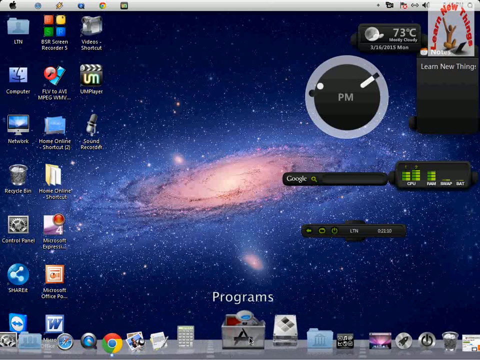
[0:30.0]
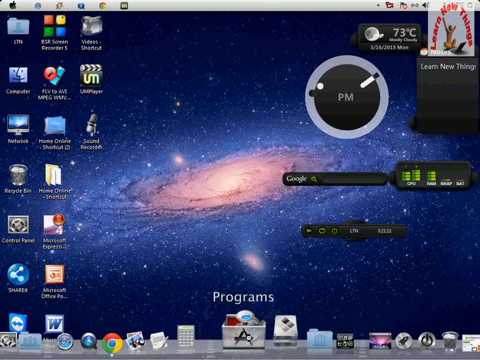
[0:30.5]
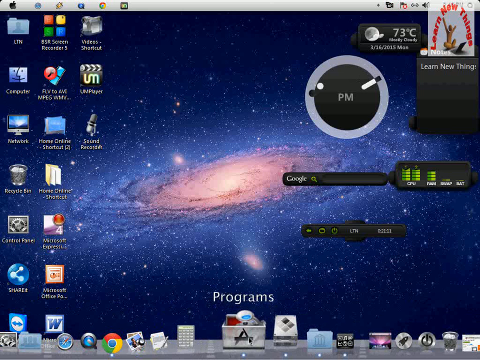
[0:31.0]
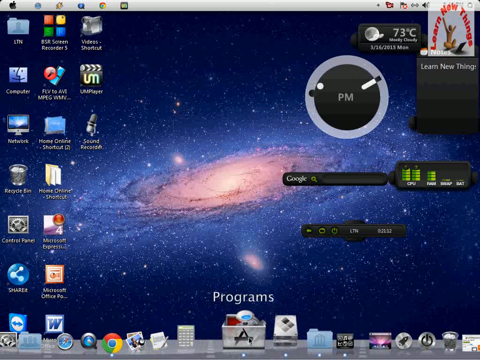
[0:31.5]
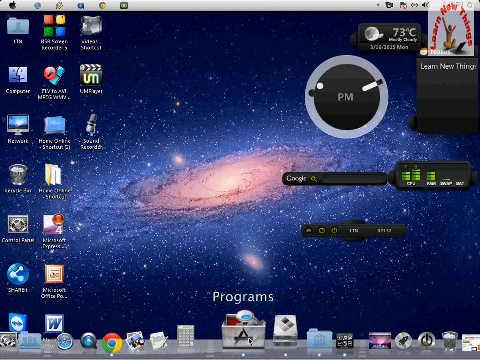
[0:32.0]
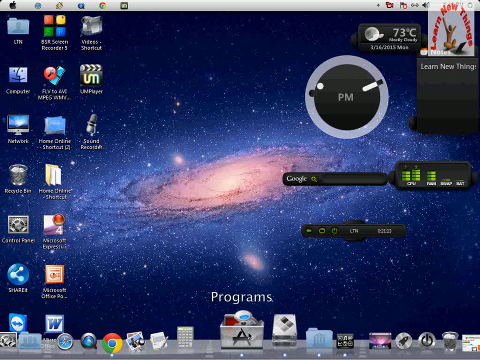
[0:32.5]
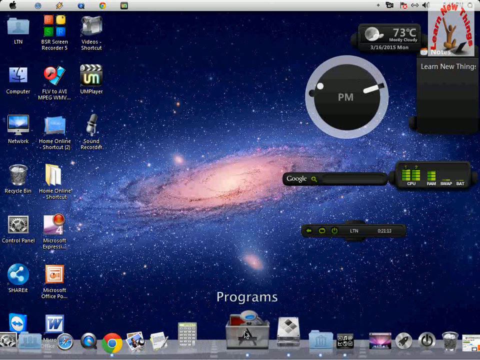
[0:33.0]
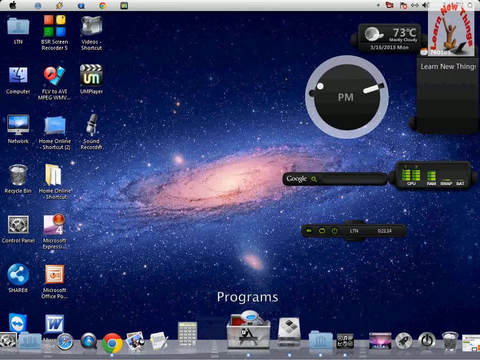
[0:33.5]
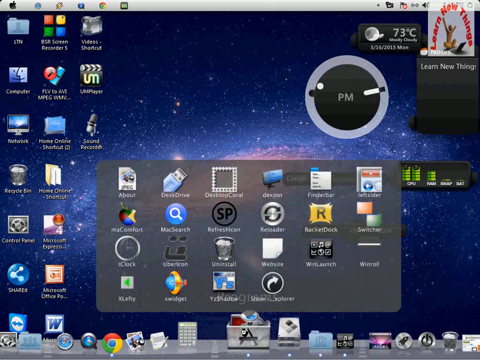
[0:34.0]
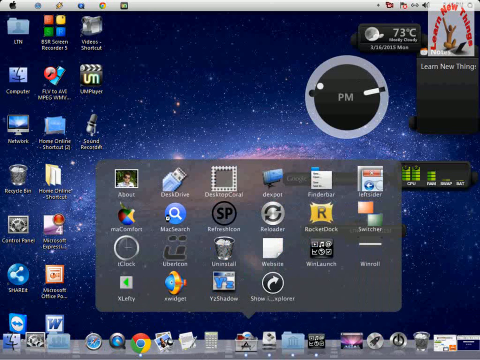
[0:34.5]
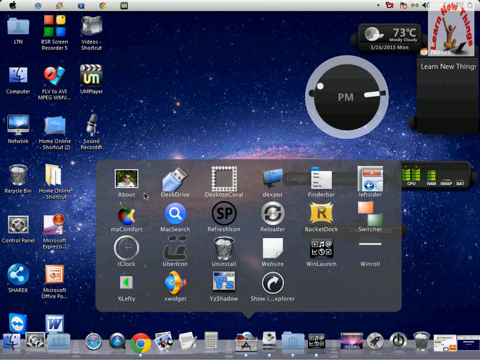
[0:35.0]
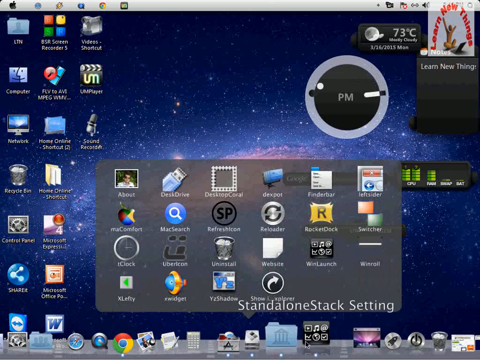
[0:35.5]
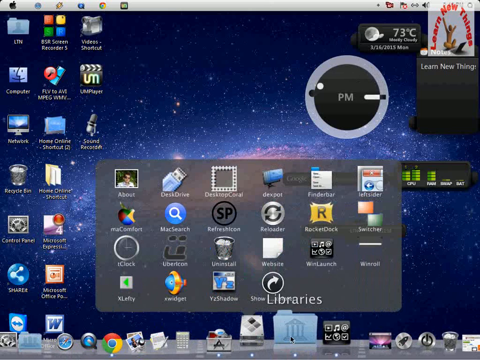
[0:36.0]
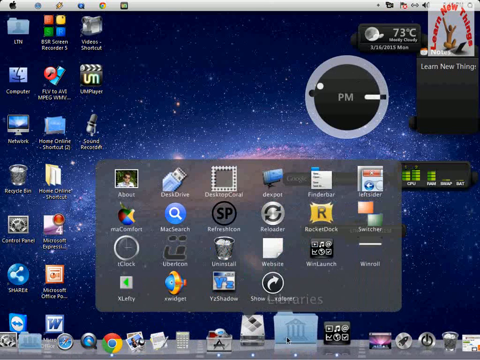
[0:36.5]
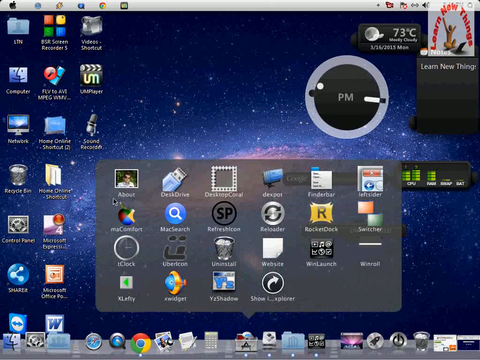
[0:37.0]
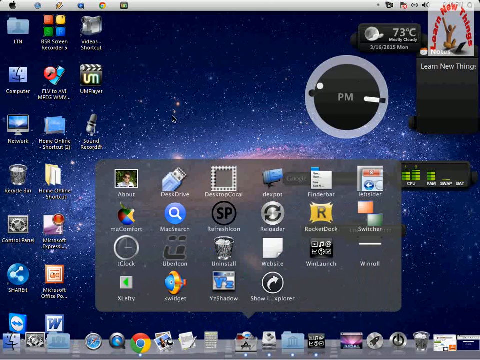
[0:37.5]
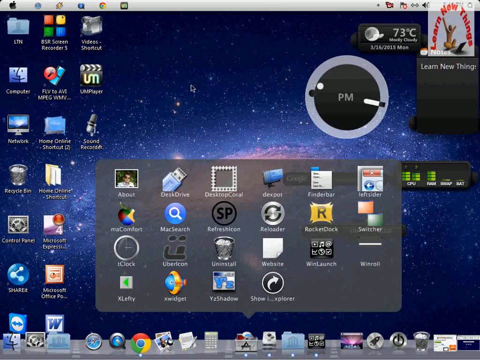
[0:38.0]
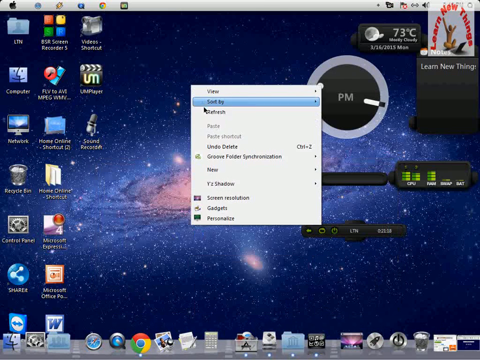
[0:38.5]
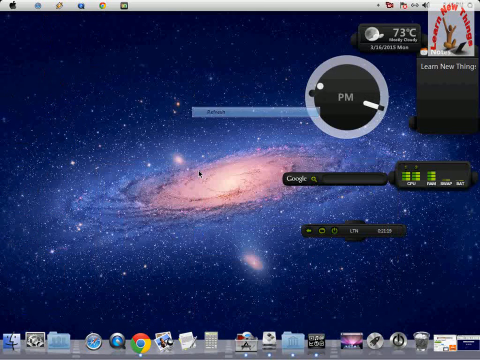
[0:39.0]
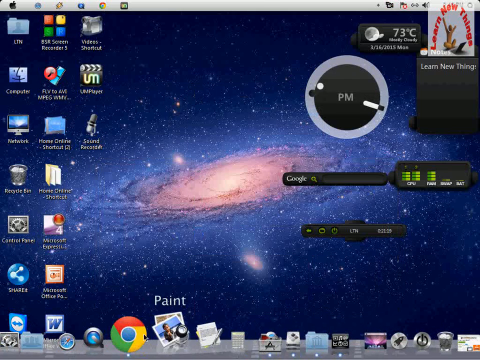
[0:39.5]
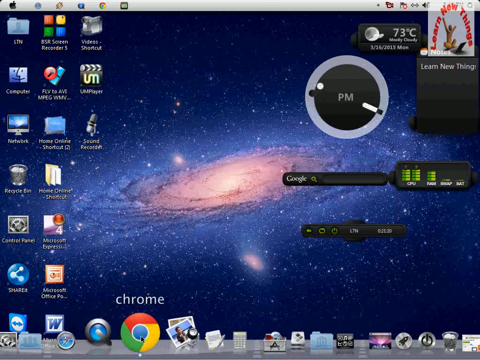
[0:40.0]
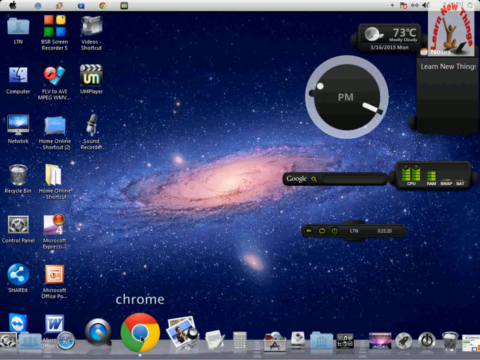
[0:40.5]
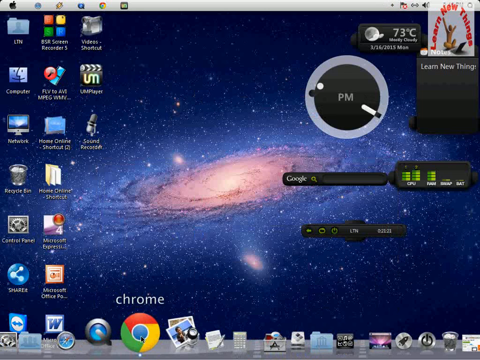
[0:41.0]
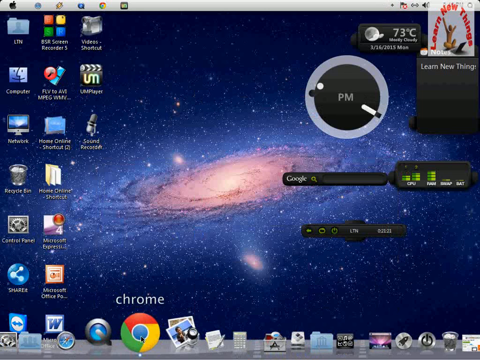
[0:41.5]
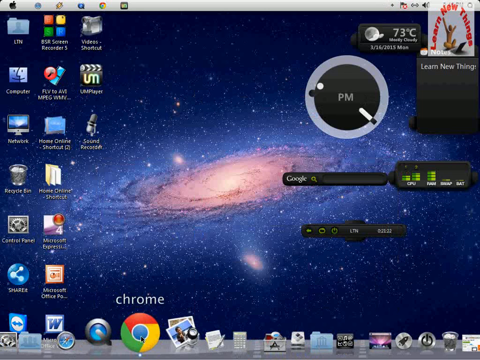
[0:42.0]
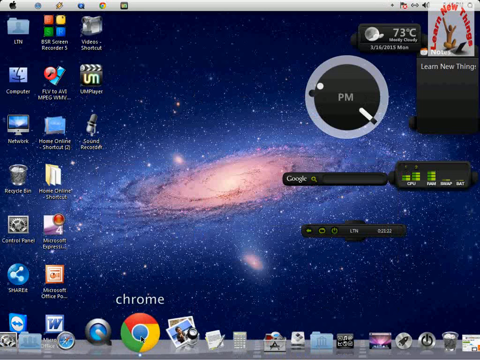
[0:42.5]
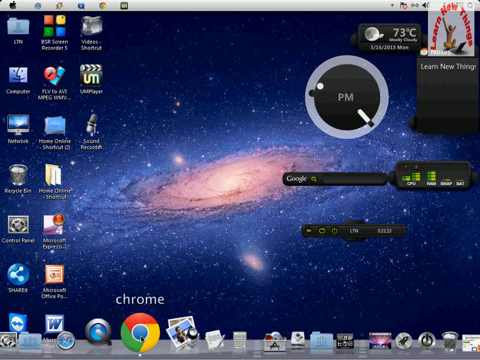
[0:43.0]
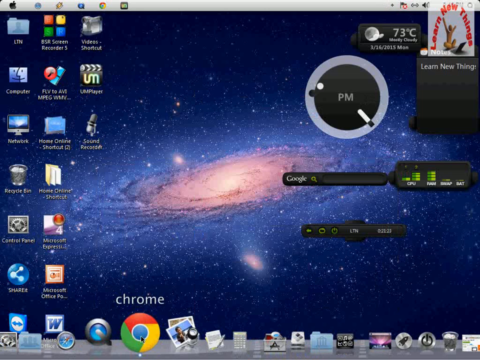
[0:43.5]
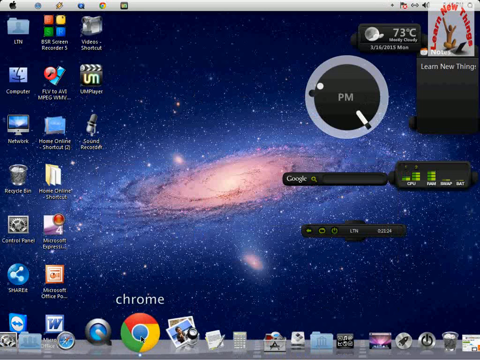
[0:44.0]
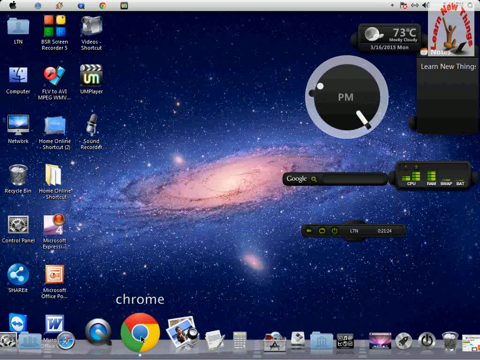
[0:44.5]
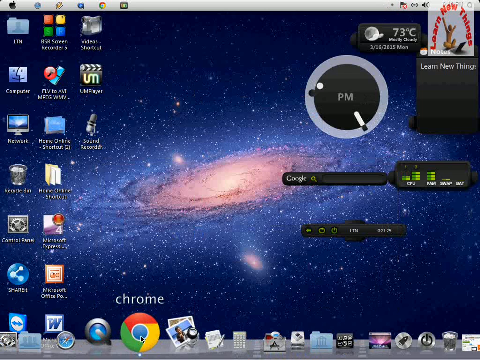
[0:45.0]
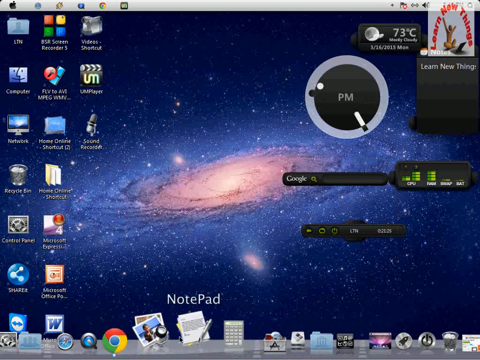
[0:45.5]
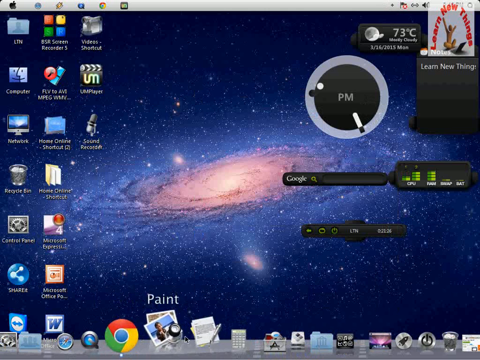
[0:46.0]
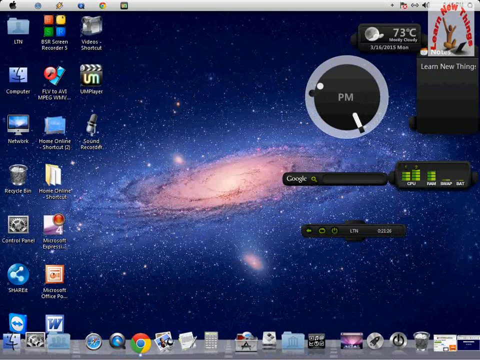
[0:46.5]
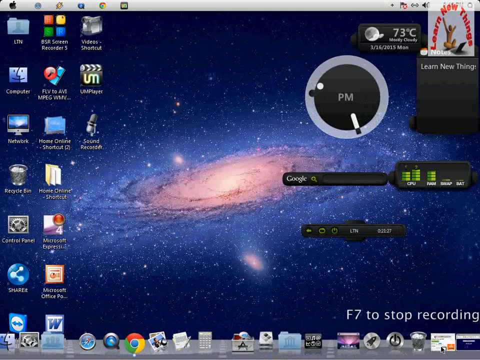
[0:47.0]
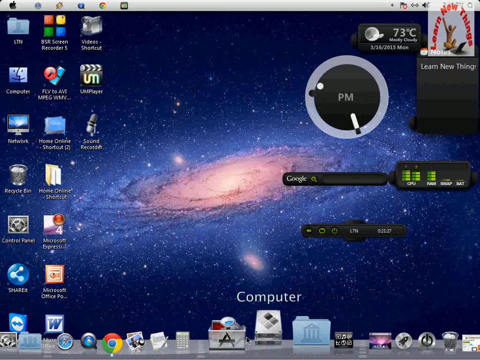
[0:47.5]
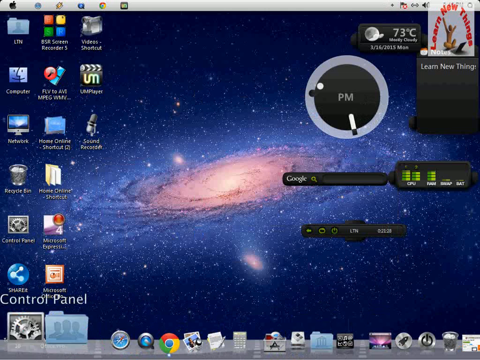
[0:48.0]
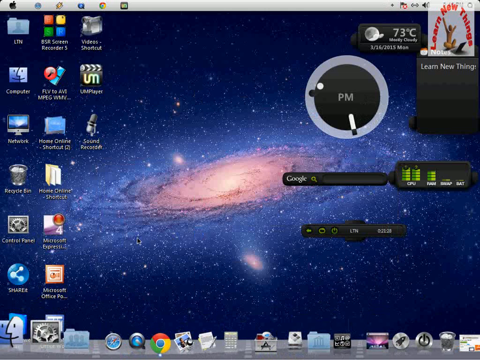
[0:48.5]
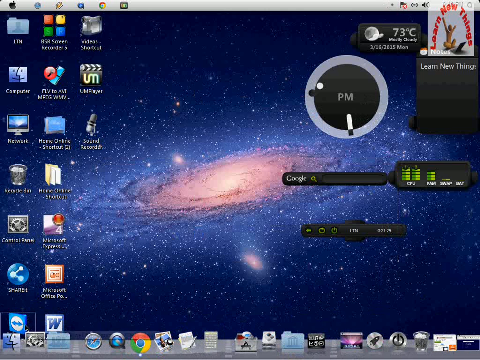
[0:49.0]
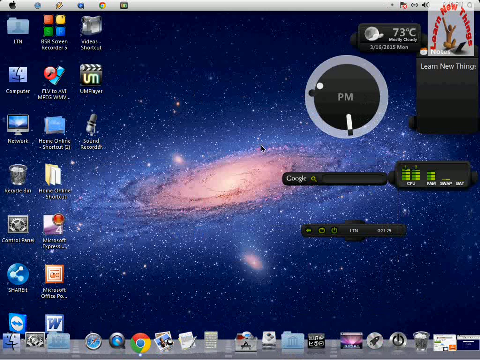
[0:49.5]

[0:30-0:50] In the upper right-hand corner there are red curves and the text "learn new things". Icons on the left side are labeled "Recycling Bin", "Word", "Microsoft Office", "PowerPoint" and "Share it". The person flicks through the icons at the bottom, labeled "Library", "Programs", "Settings", "Chrome", "Calculator" and "App Store". They click on something labeled "About", then hit "Refresh", stop on Chrome for a moment, and move over to Paint, then Notepad, then Dock Settings, going back and forth.